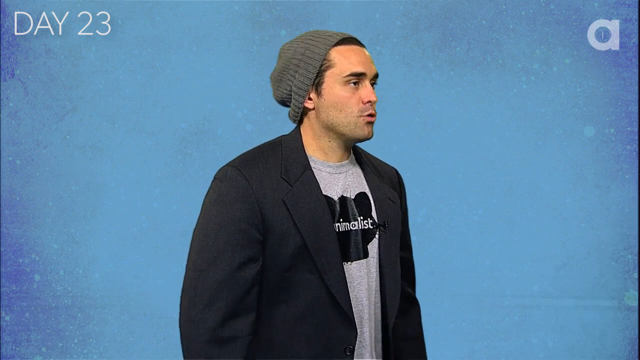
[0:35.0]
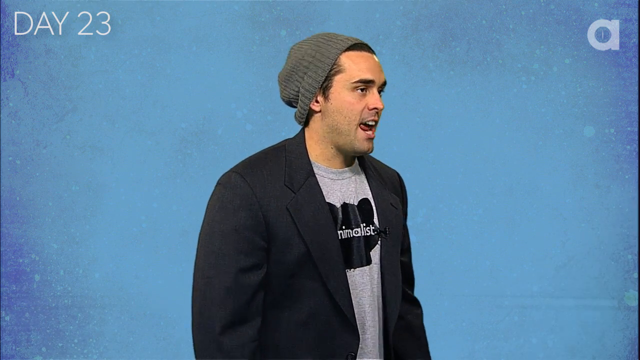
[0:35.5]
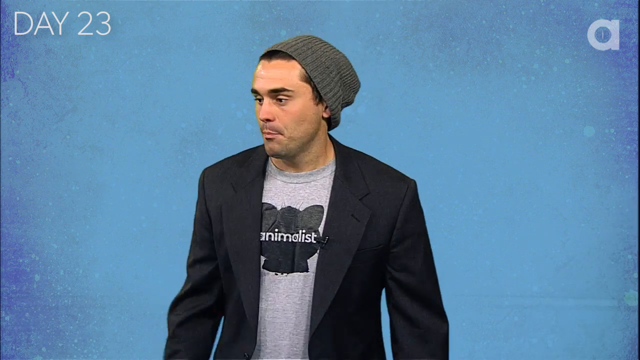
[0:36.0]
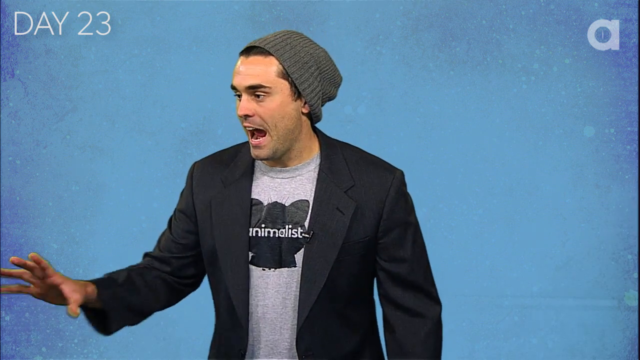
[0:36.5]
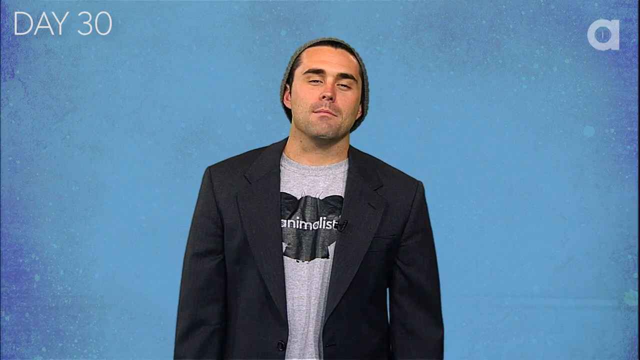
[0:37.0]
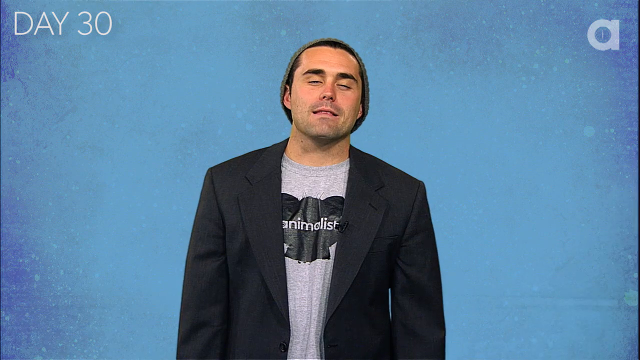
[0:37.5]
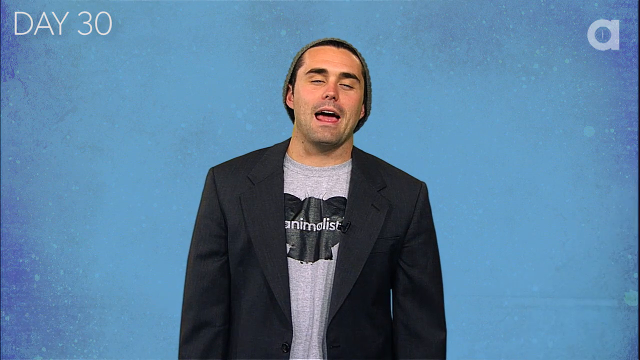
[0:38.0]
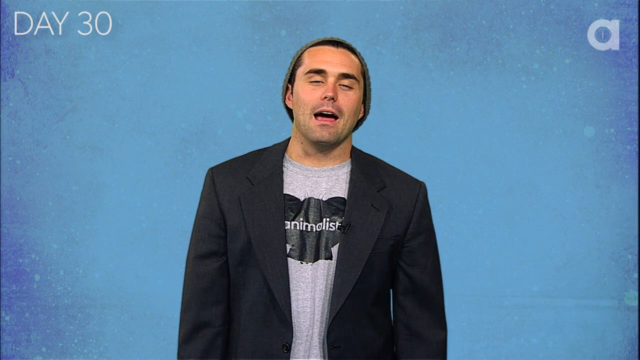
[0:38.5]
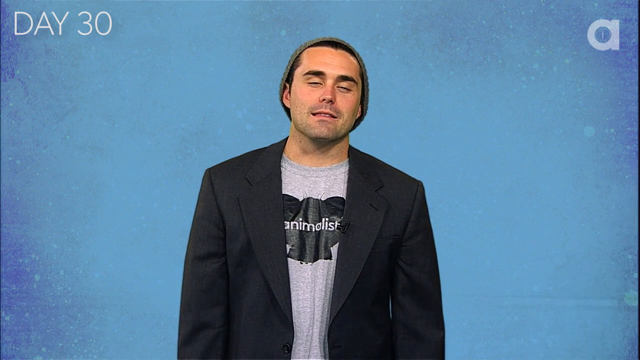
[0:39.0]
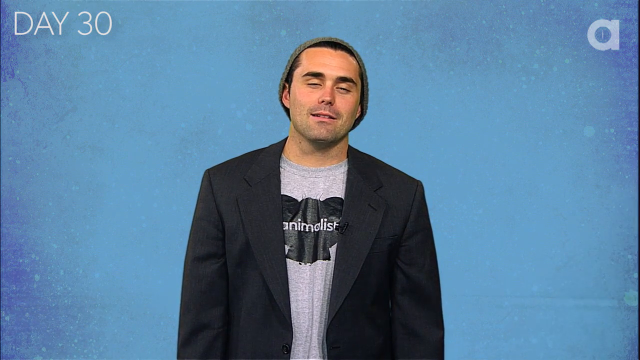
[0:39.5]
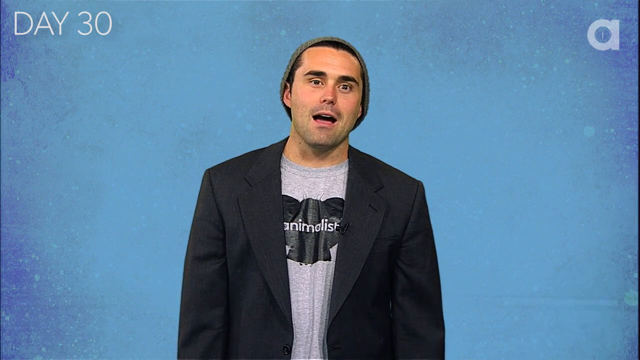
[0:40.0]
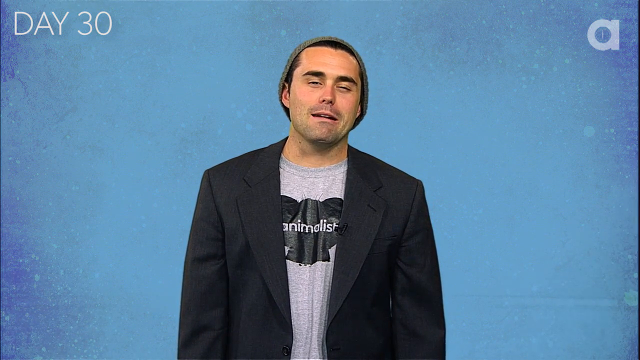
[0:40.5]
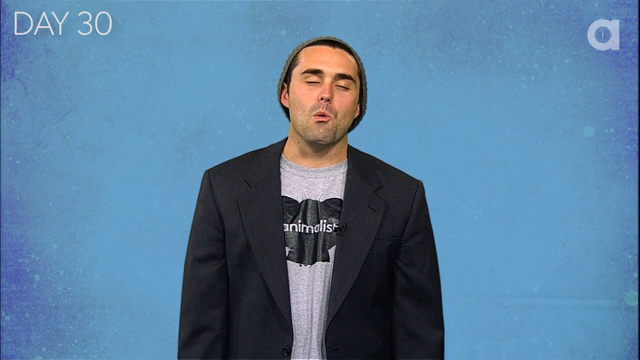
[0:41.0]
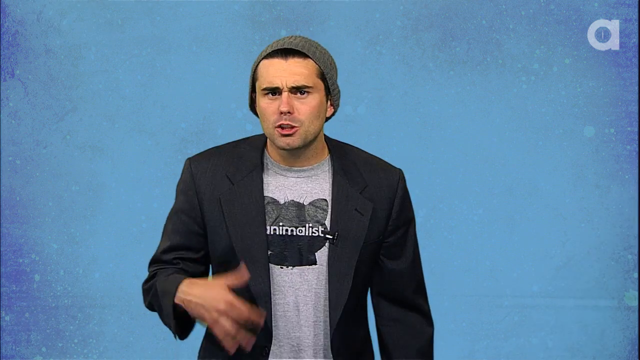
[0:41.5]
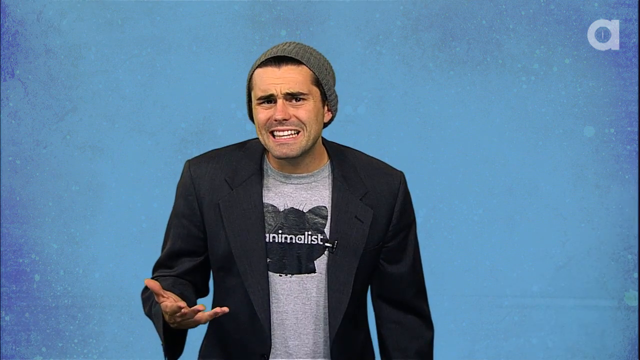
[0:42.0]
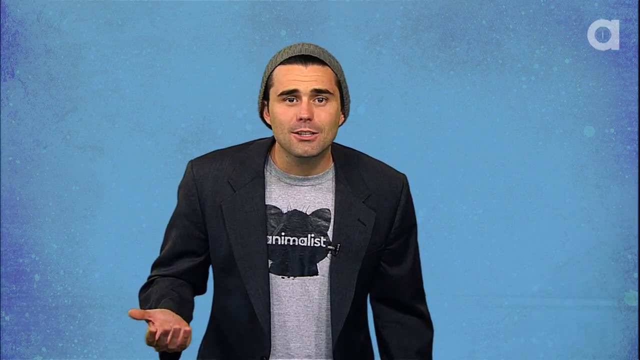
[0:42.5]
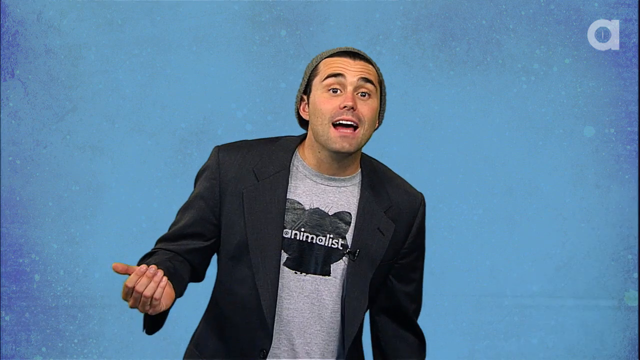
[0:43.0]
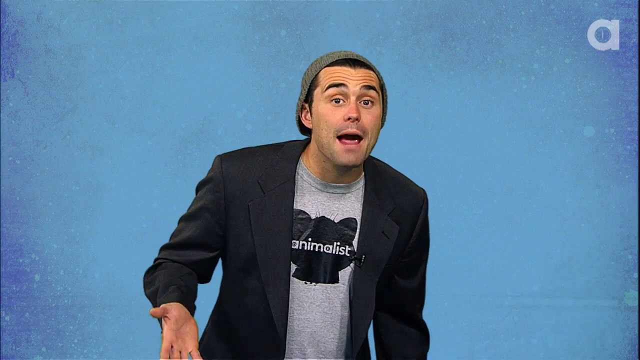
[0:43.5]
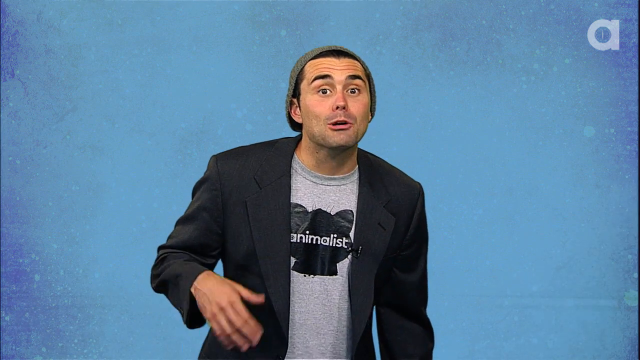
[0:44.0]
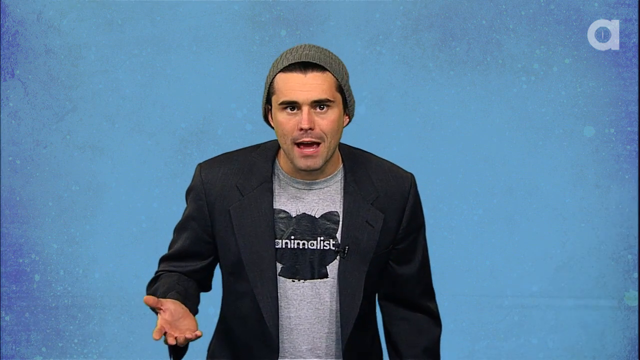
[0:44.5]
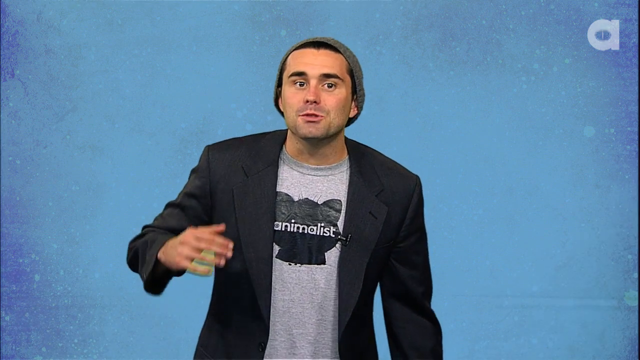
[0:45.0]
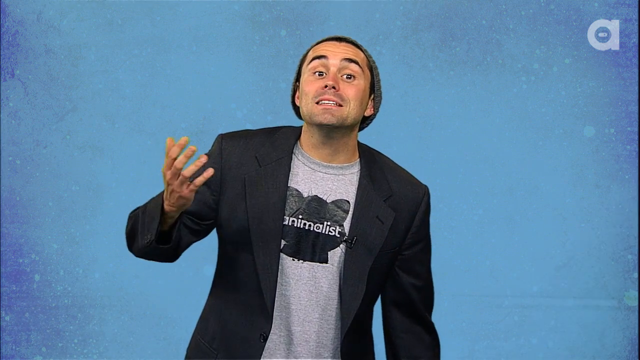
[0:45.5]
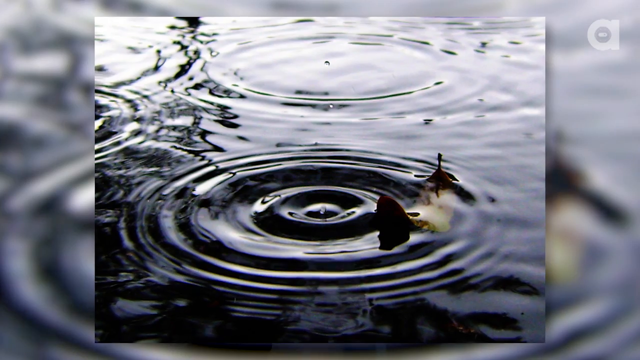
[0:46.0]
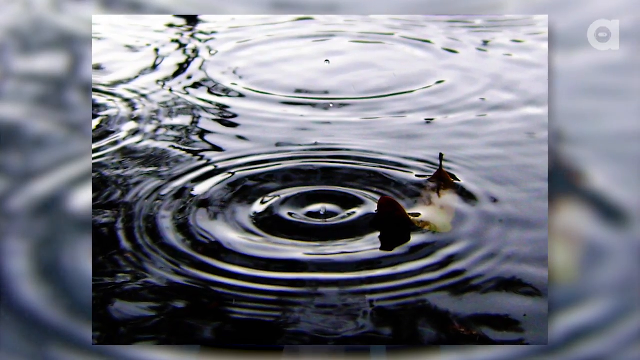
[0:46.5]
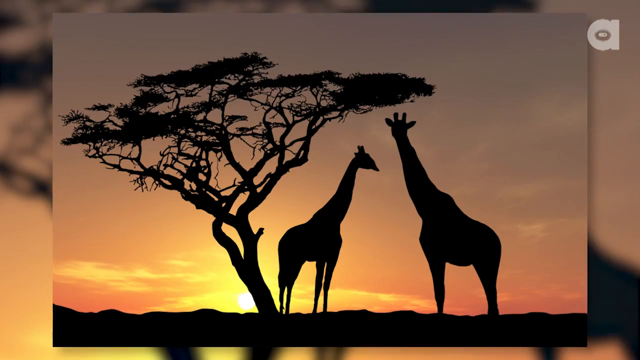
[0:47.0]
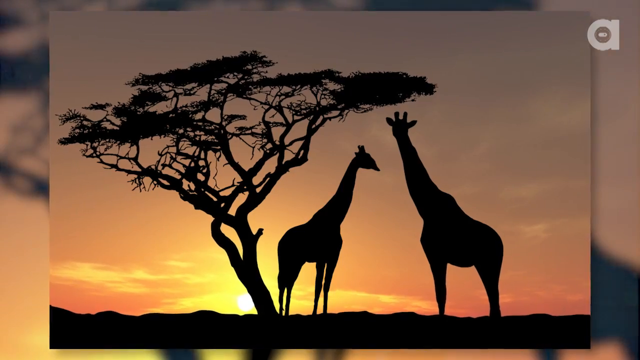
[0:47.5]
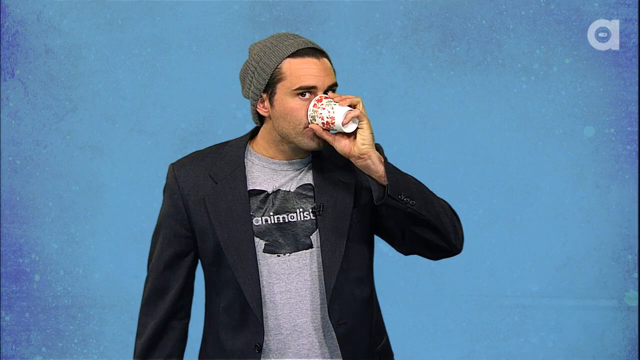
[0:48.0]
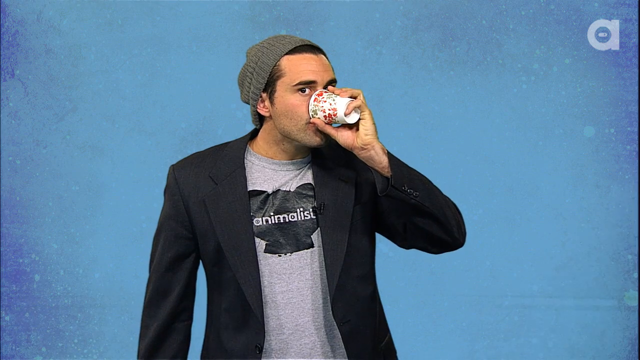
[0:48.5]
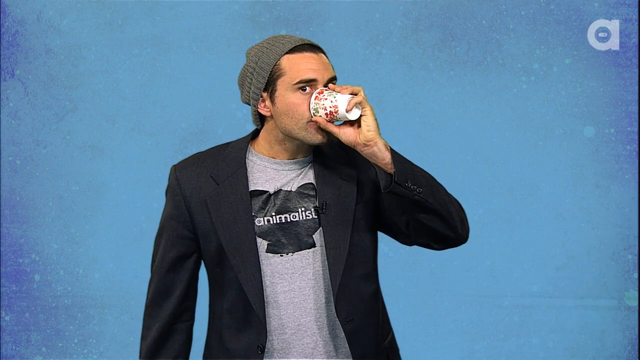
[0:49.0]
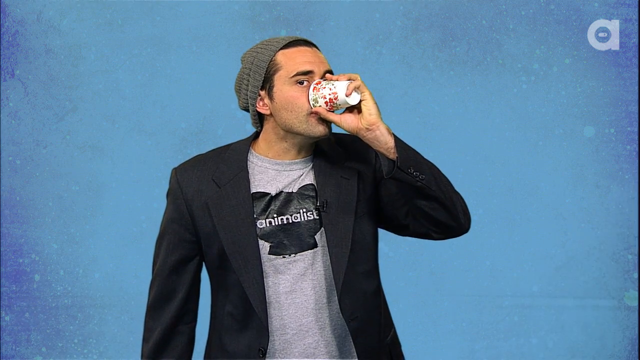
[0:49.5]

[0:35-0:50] The host is against the blue background, looking to the right and speaking in a very animated way, then turning to the left and speaking animatedly, then looking at the camera. The Animalist News graphic appears: a blue background with black silhouettes of animals and the words "Animalist News" centered in it. It cuts back to the host, who gestures wildly with his hands and makes strange faces as he speaks, followed by a photo of the goldfish-sized red fish swimming very close to the bottom of a tank lined with brown pebbles. The host returns, speaking animatedly. Another graphic shows water splashing and then giraffes under a tree, and it cuts back to the host drinking a cup of water before he begins speaking and gesturing wildly again. The image then cuts to a photo of an older man wearing glasses, with very short hair.